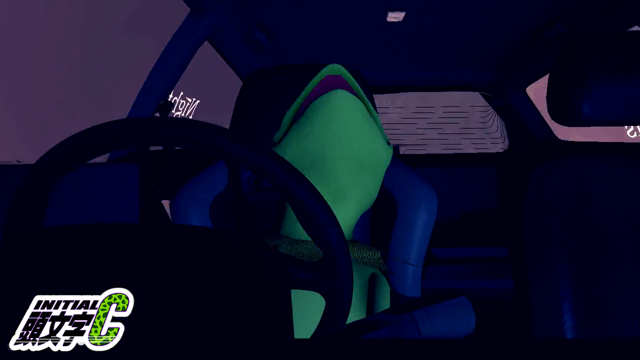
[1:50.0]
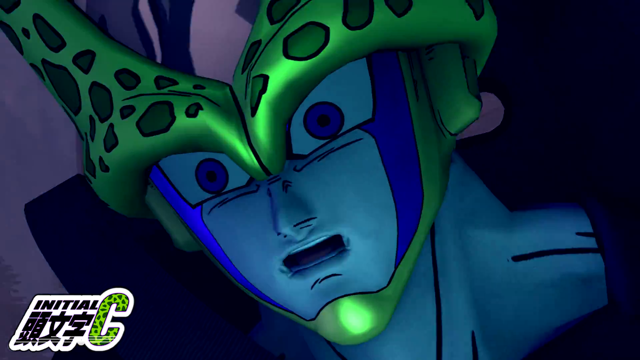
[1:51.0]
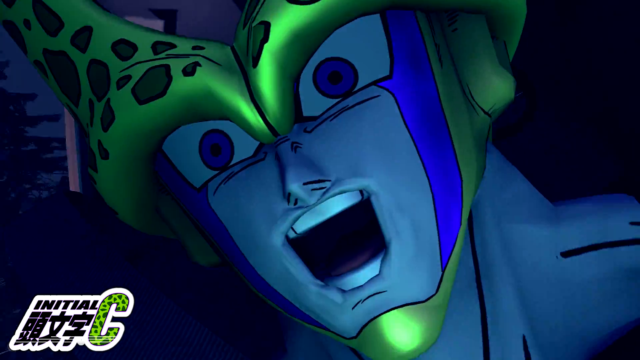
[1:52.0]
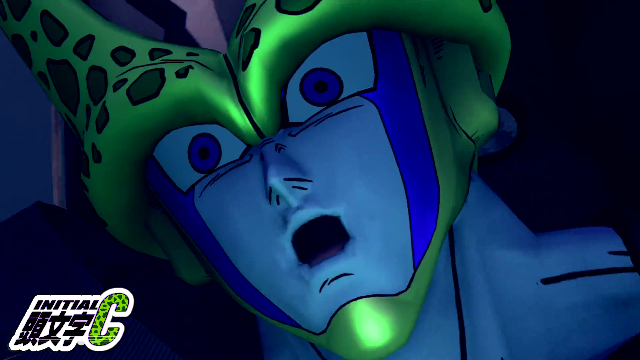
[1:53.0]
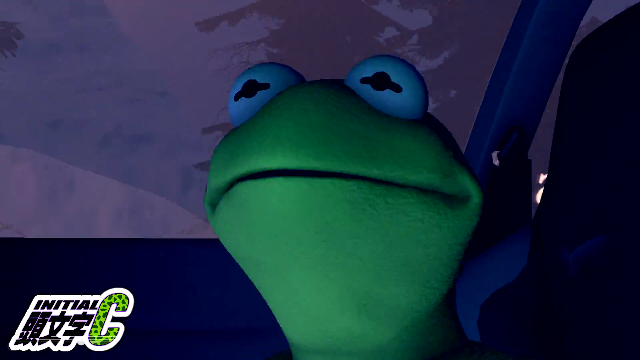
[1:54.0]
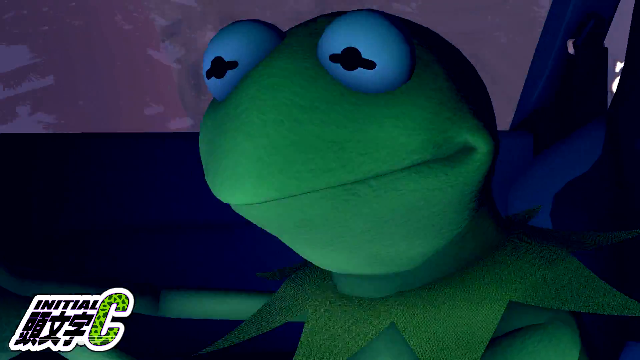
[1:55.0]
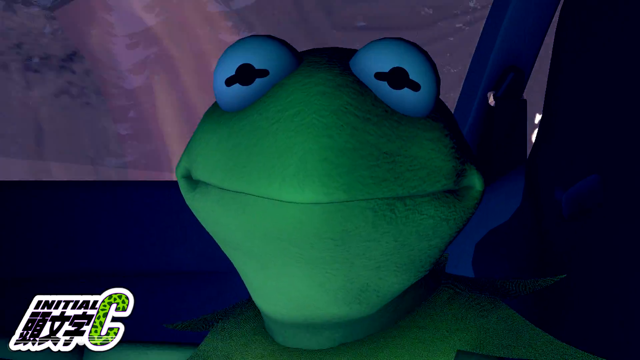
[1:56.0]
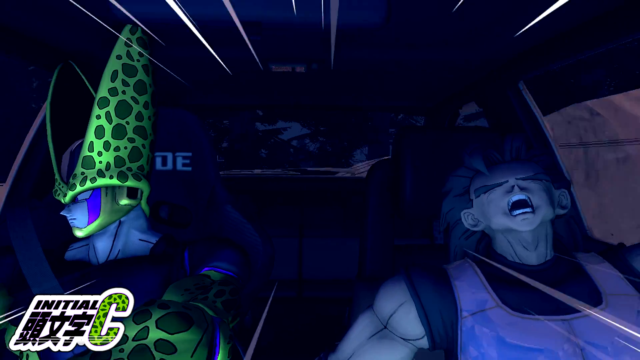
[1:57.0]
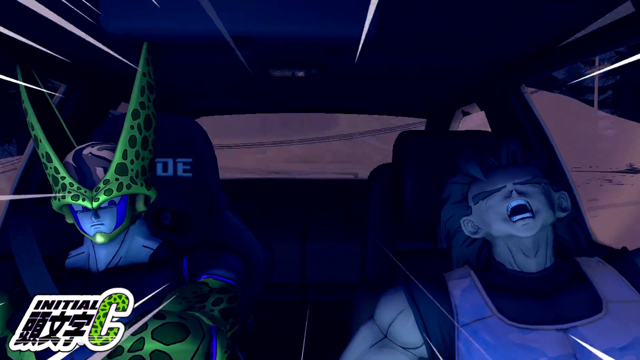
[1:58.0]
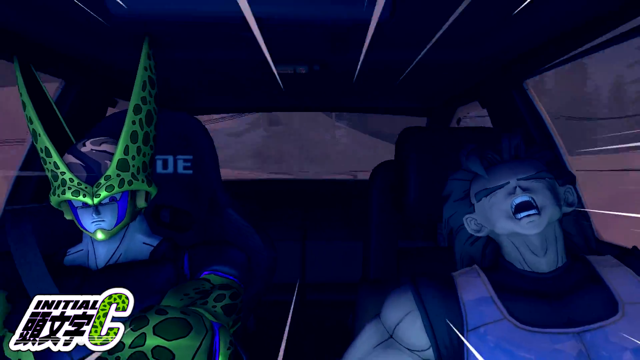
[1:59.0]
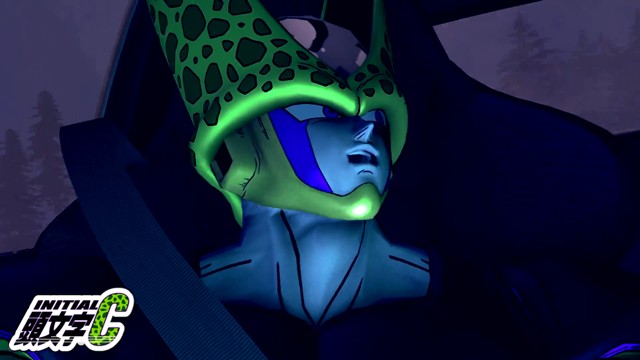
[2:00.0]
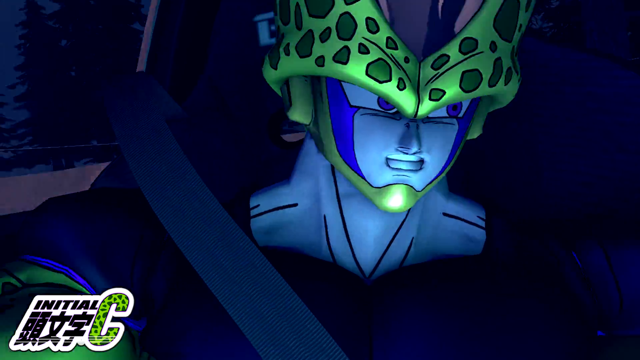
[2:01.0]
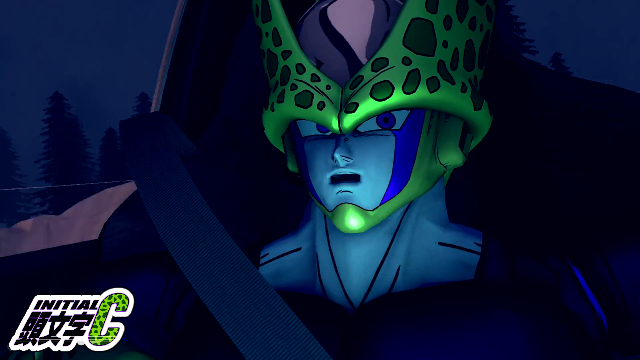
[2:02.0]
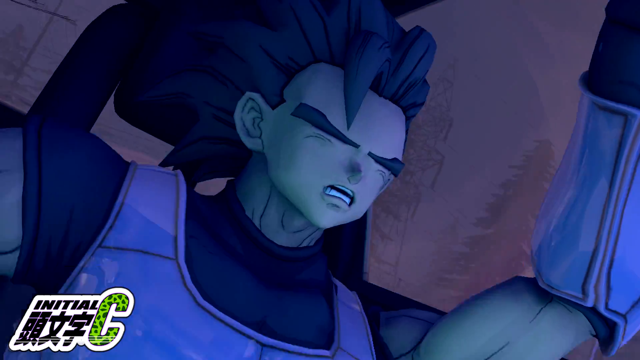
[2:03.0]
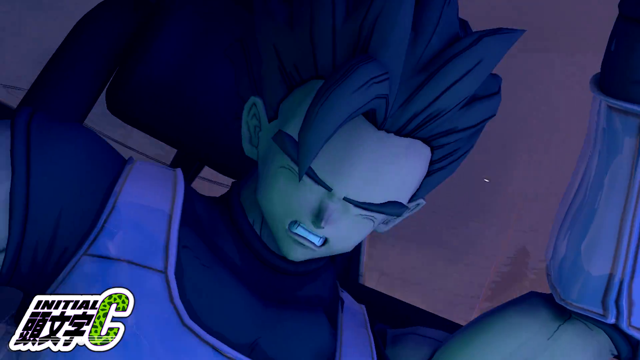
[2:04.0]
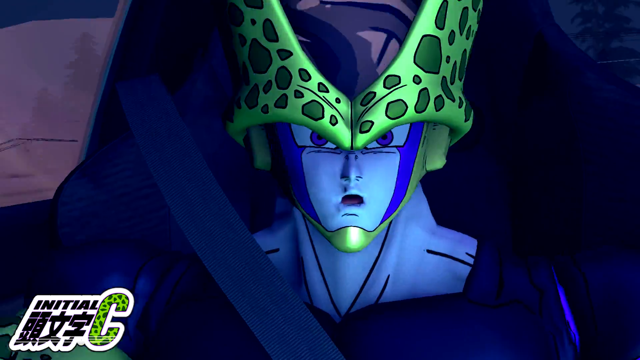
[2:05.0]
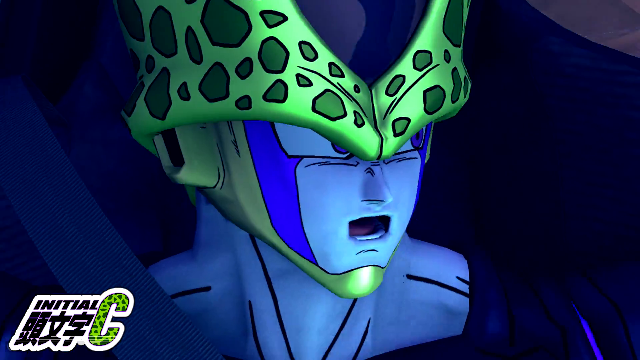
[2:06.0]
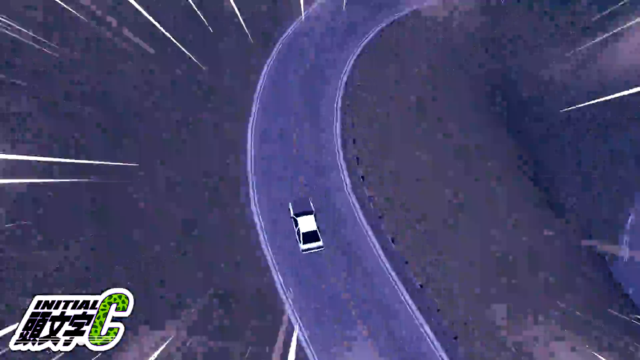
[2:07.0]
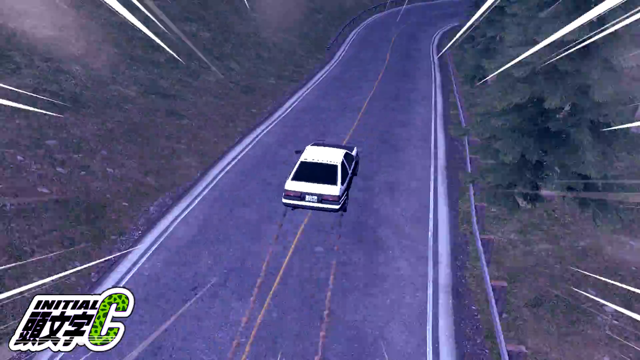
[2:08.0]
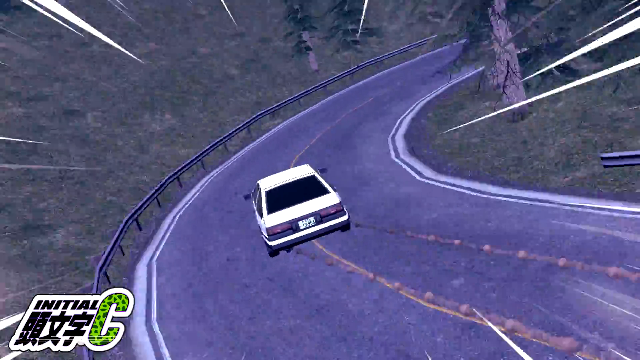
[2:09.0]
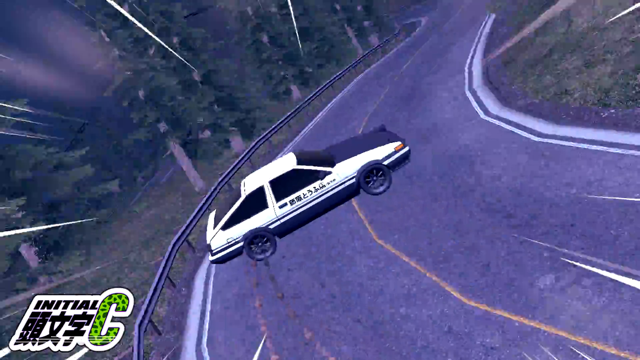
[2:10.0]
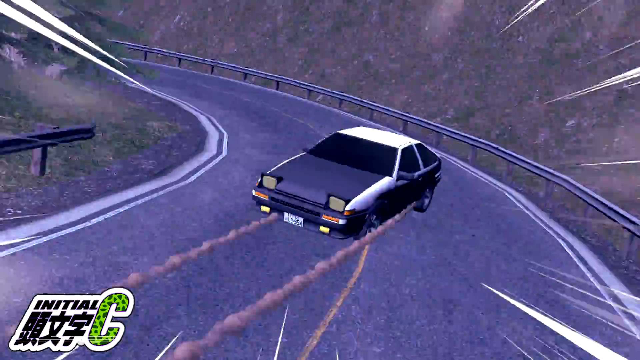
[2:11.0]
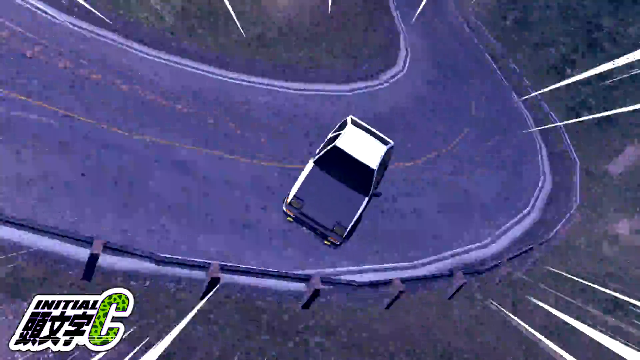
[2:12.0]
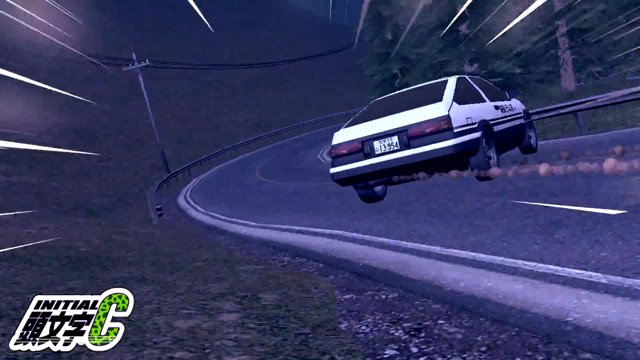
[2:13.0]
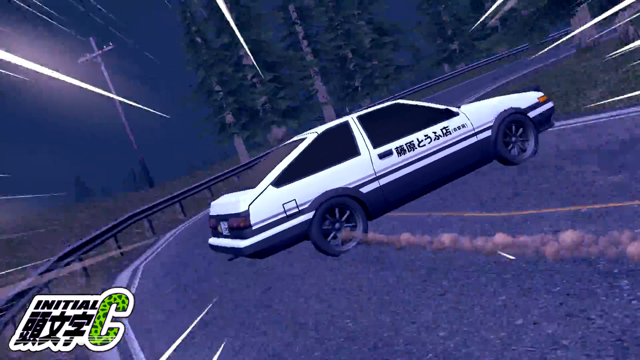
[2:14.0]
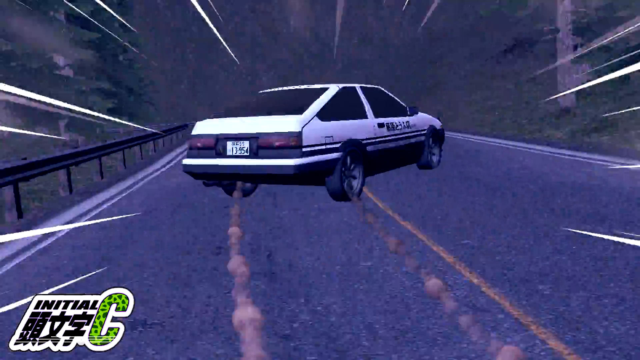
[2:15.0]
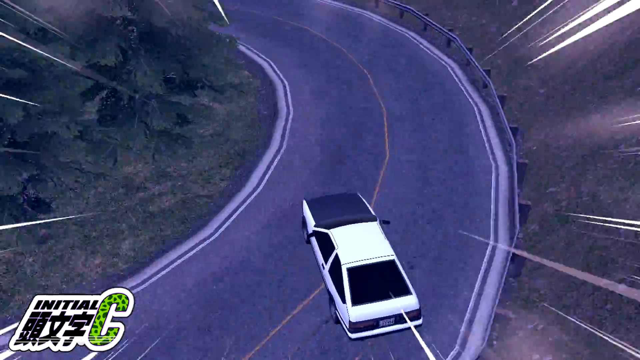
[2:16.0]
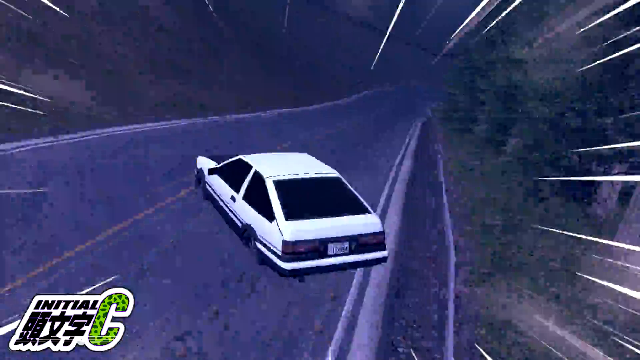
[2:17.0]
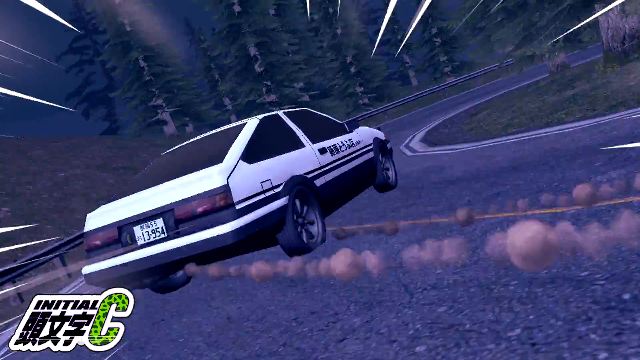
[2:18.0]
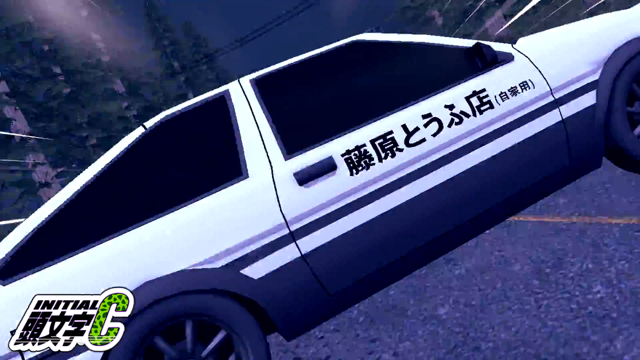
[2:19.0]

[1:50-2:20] Kermit is going so fast that his head is pressed against the seat for a moment. He is talking, and the Dragon Ball characters go at a very fast speed, spinning out around curves while keeping their traction on the road. Kermit apparently crosses the finish line before them. The Goku character holds on for dear life and looks really nervous, as if they are about to die, as they spin around the dangerous curves. They are racing in the forest at either dawn or dusk, with apparently mountains and many hills surrounding them. The sky is very purple, with very few stars out.